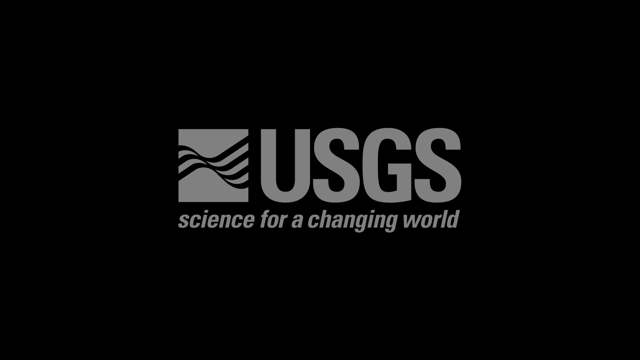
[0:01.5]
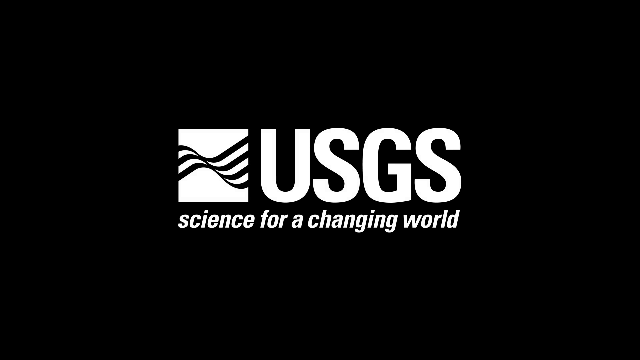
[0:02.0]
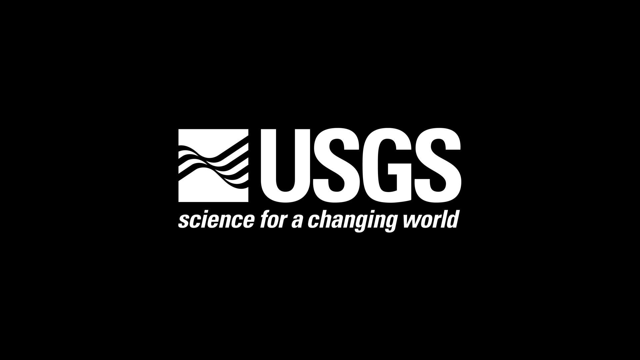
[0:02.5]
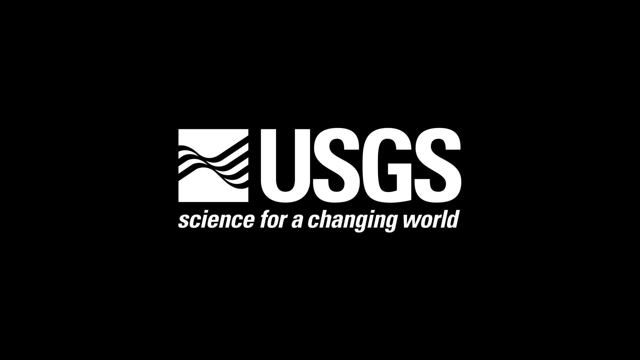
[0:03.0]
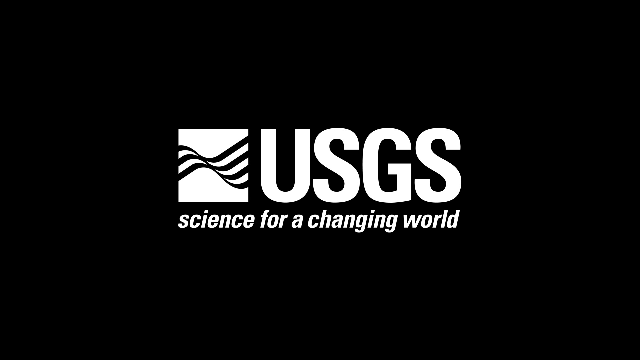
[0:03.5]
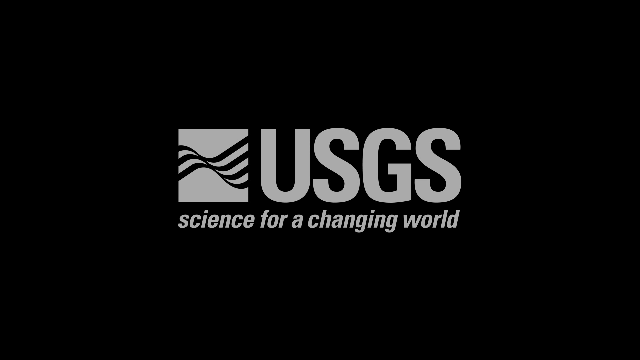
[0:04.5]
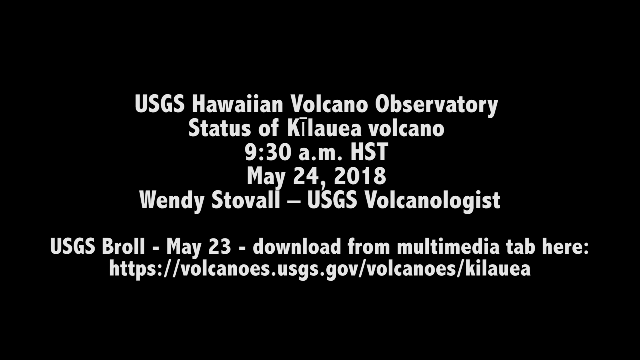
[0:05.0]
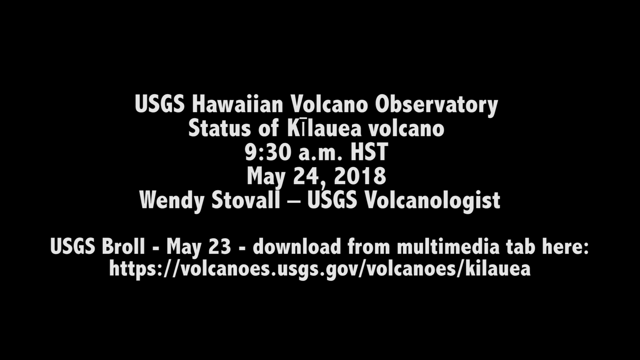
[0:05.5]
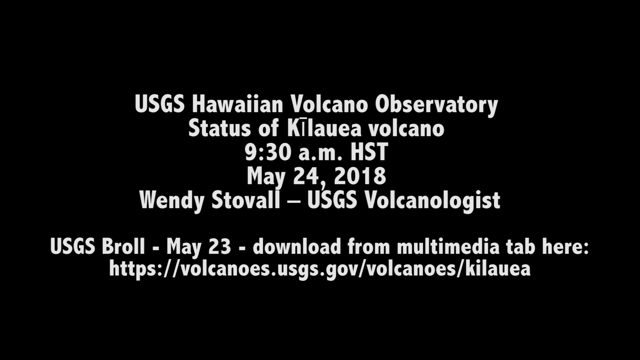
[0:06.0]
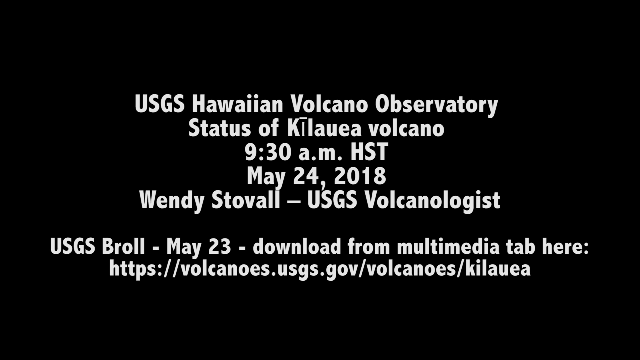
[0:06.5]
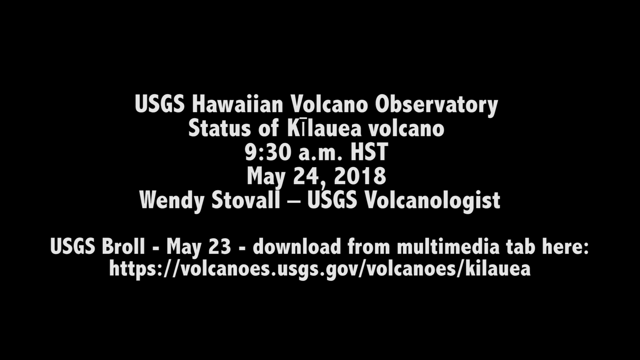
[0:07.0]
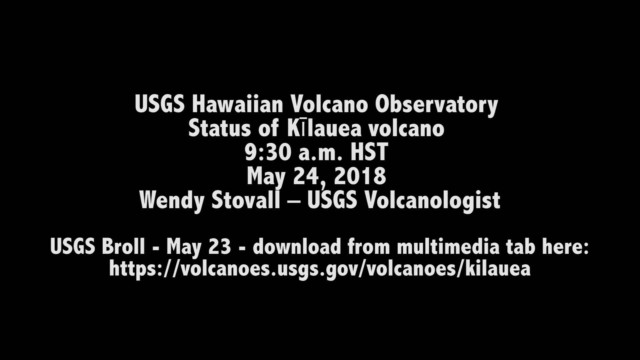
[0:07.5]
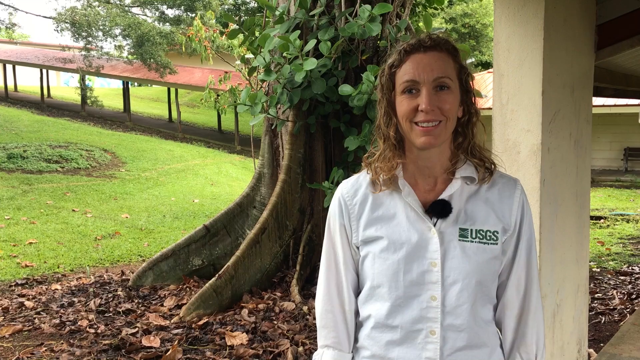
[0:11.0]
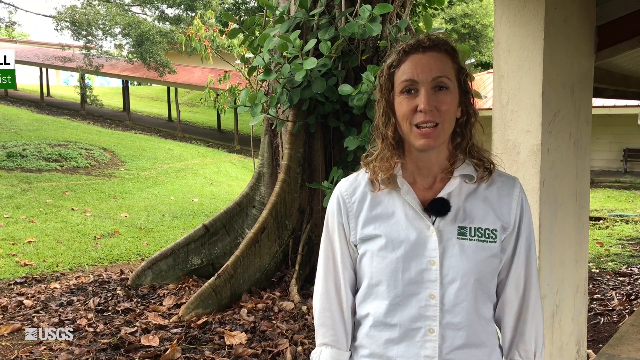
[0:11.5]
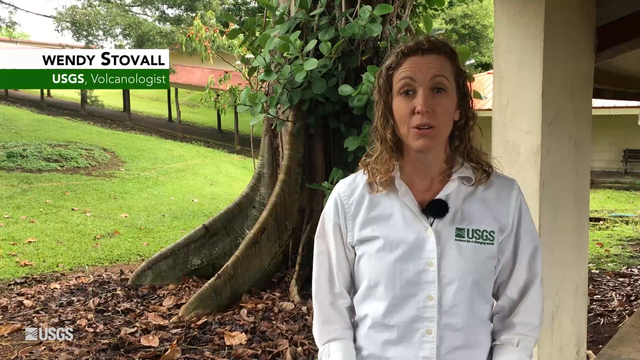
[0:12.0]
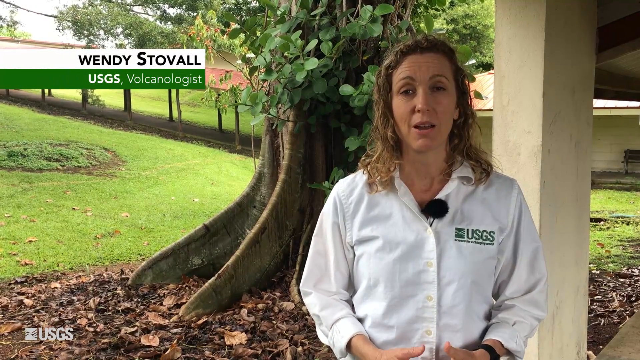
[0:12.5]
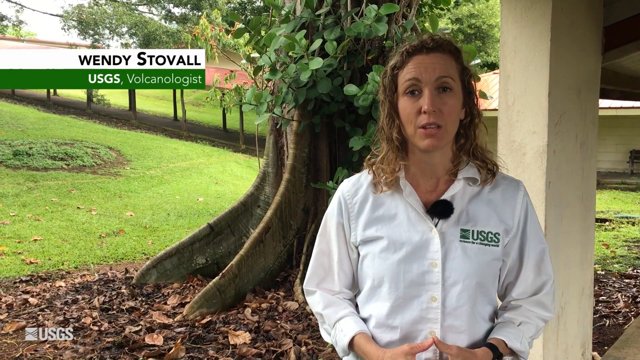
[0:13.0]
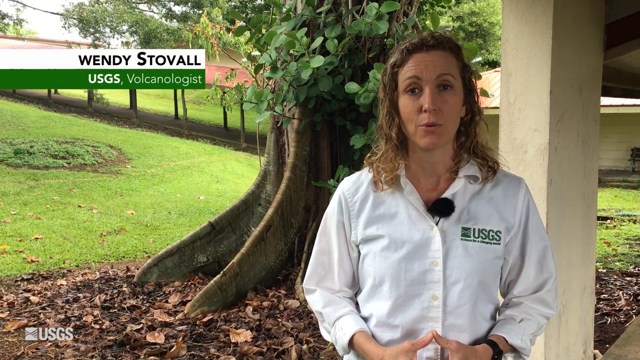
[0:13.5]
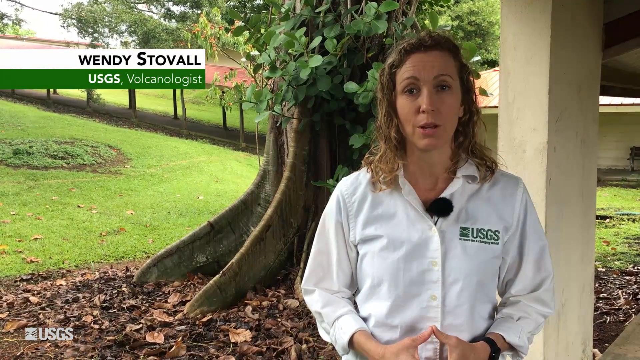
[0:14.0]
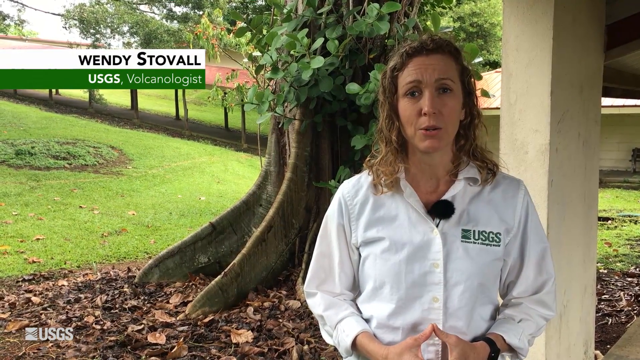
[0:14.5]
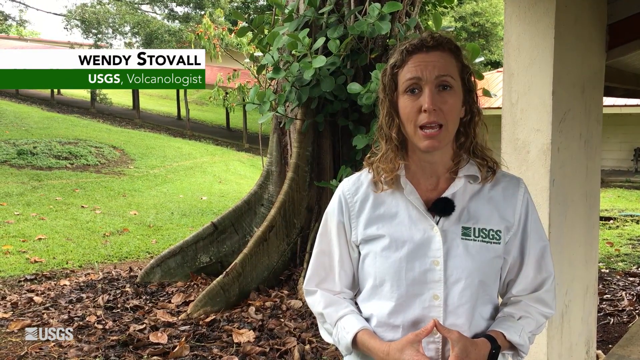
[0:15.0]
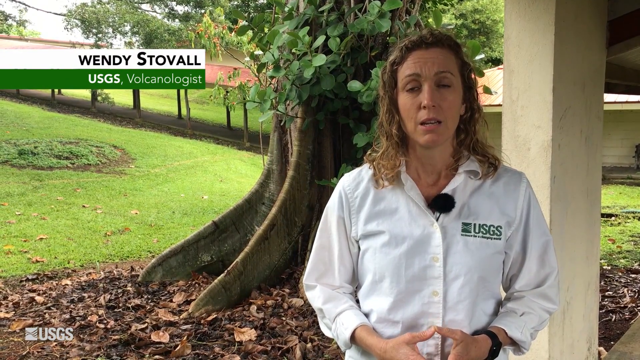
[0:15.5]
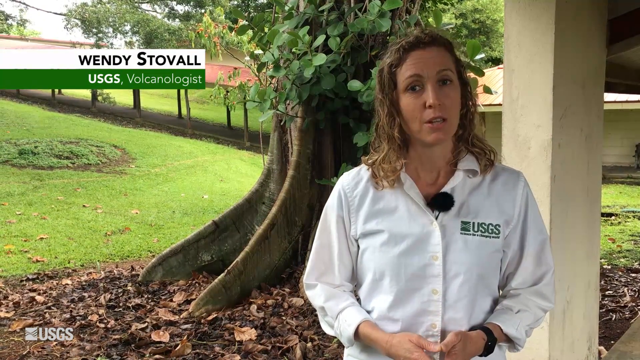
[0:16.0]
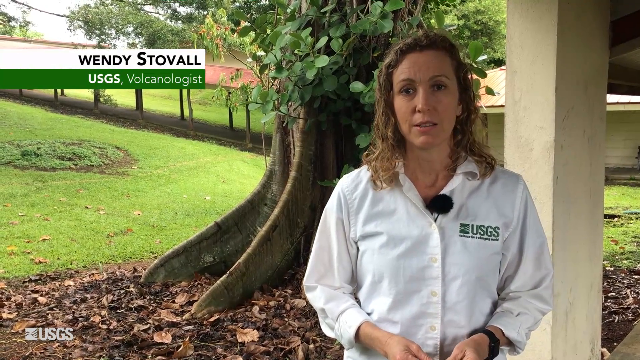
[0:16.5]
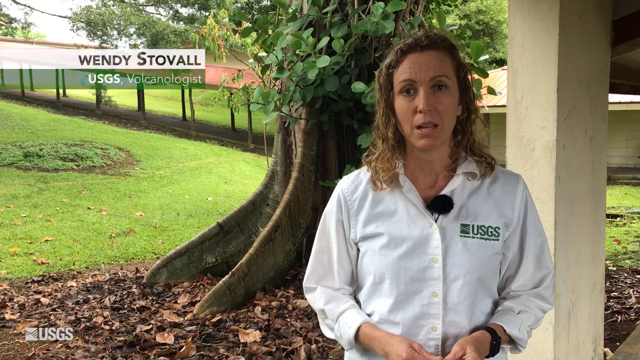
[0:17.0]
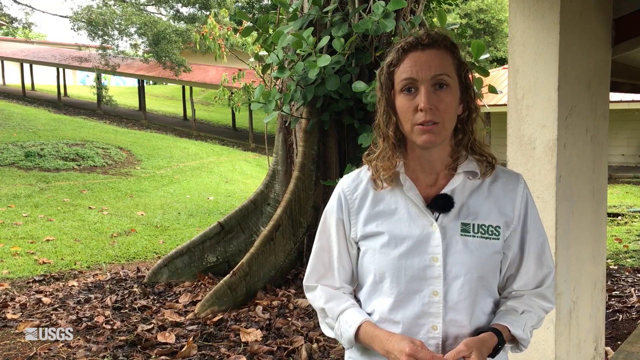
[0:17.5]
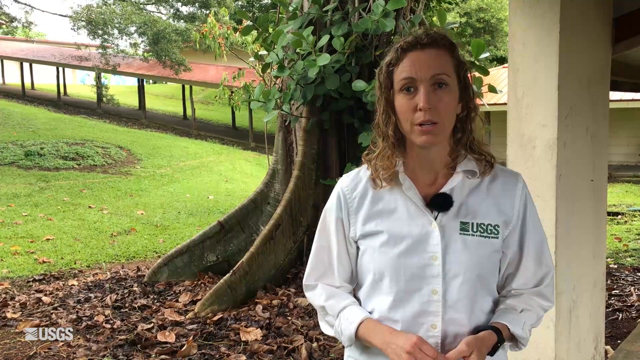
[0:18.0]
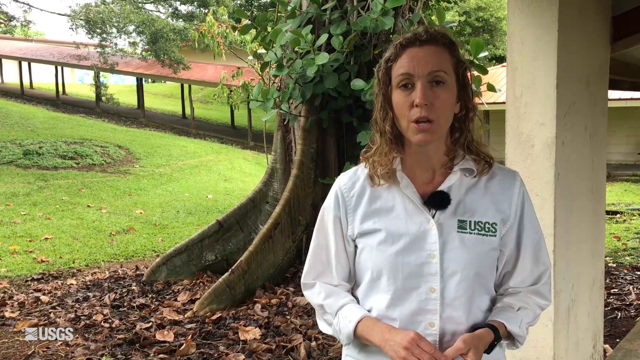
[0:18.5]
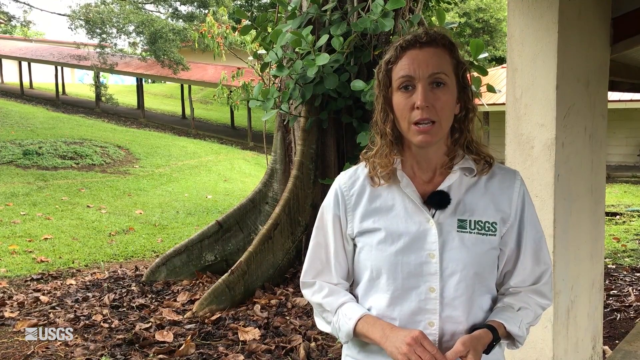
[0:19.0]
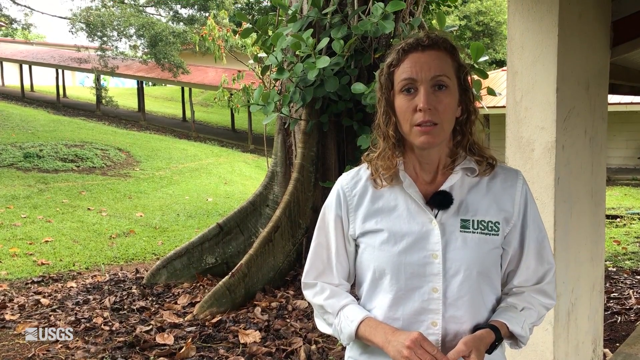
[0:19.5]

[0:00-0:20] The video, from the U.S. Geological Service, is an update about the Kilauea Volcano, with the text "science for a changing world." The on-screen text gives the time as 9:30 a.m., May 24, 2018. Wendy Stovall, a volcanologist, speaks at the beginning; the text identifies her as a U.S. Geological Service scientist from the U.S. Geological Service Volcano Observatory, and the subject as the status of Kilauea Volcano. Text reading "download from multimedia tab" appears, and a website where information about Kilauea can be found is shown.